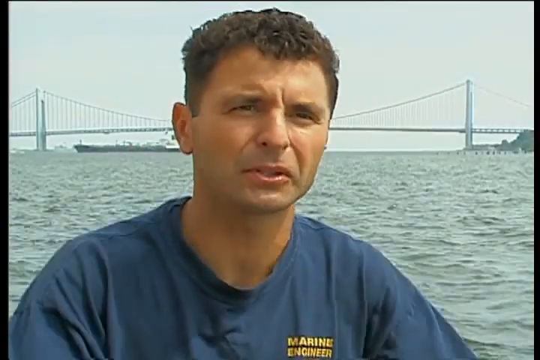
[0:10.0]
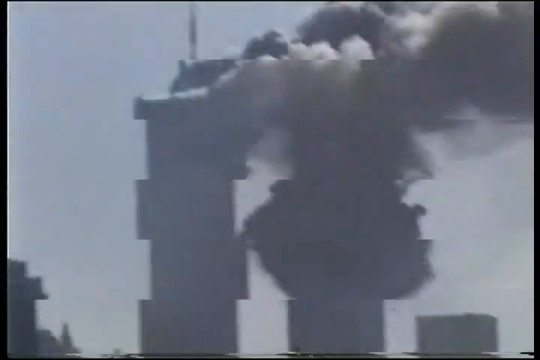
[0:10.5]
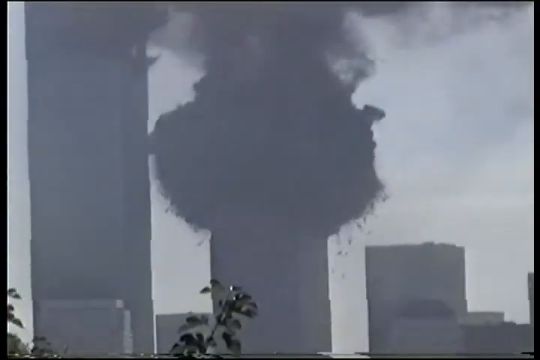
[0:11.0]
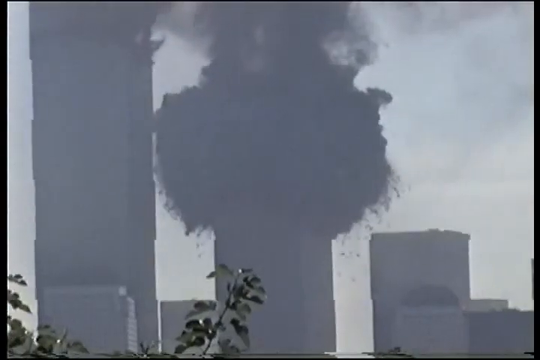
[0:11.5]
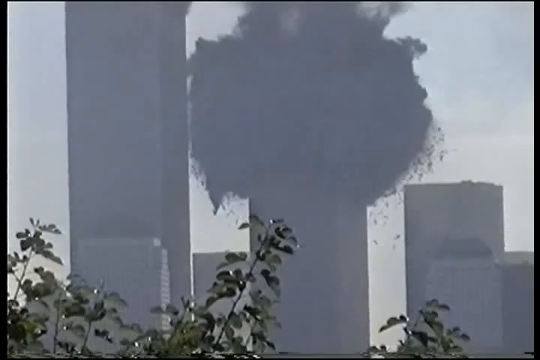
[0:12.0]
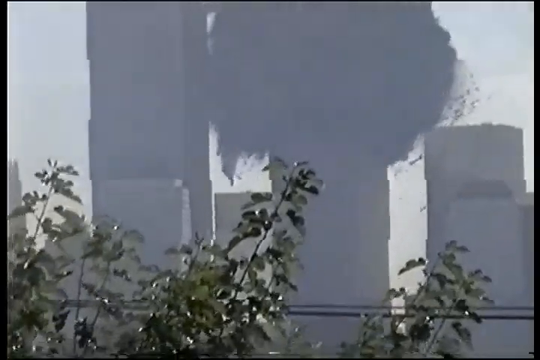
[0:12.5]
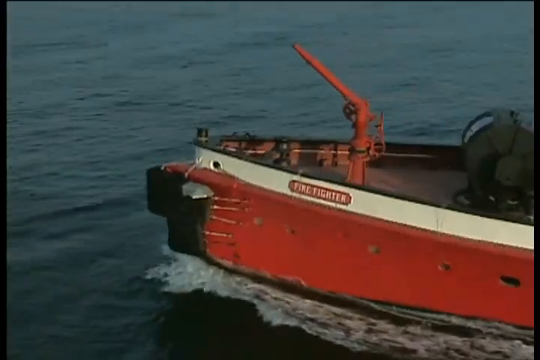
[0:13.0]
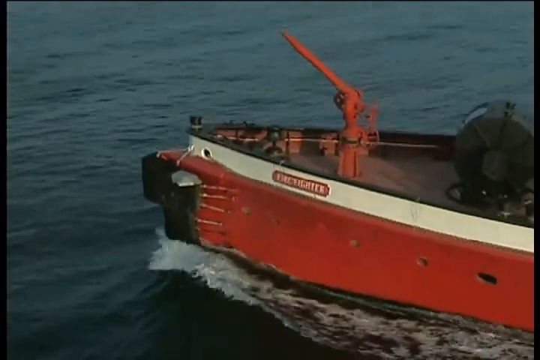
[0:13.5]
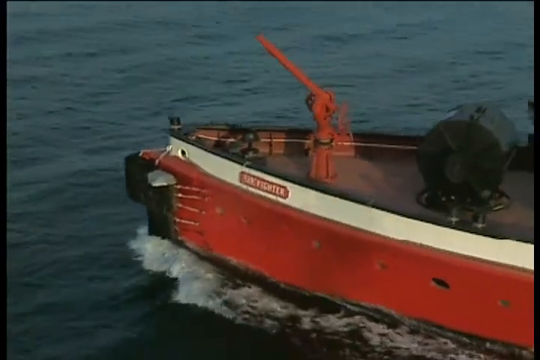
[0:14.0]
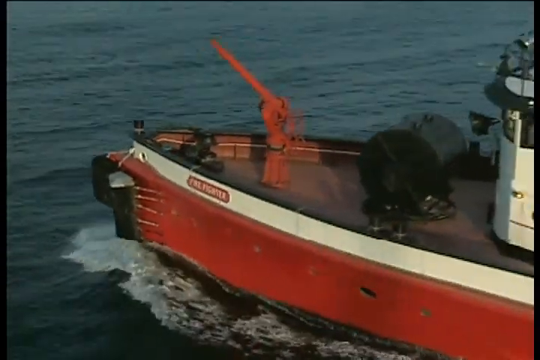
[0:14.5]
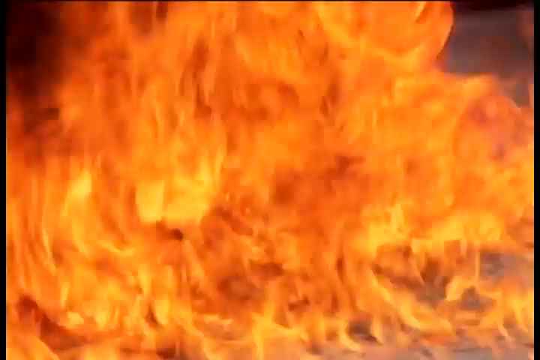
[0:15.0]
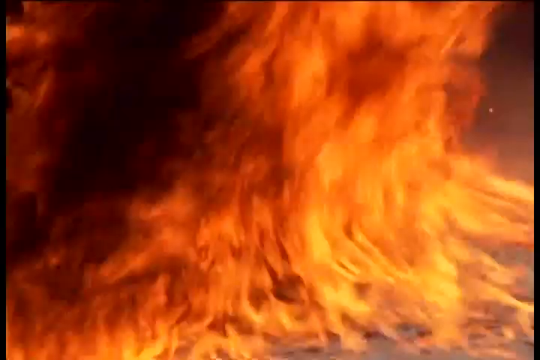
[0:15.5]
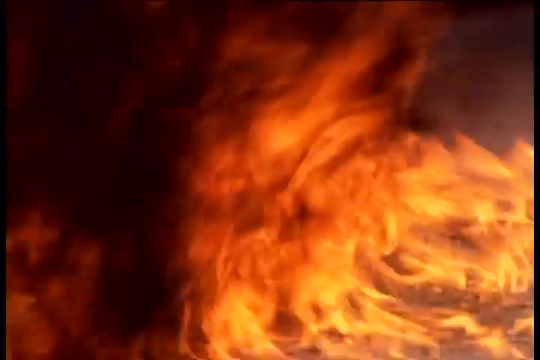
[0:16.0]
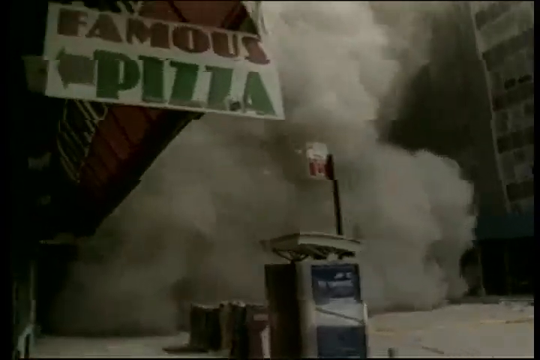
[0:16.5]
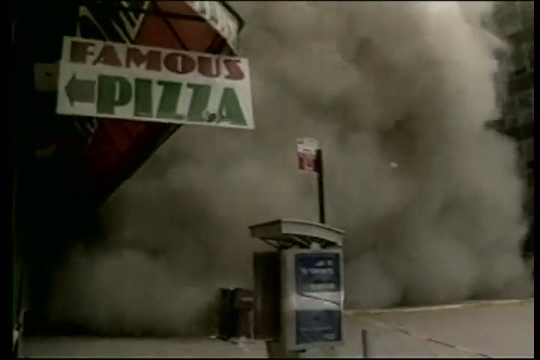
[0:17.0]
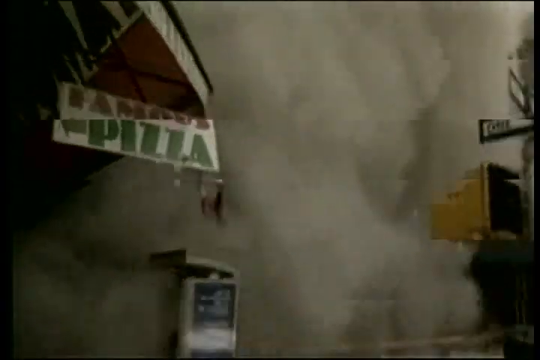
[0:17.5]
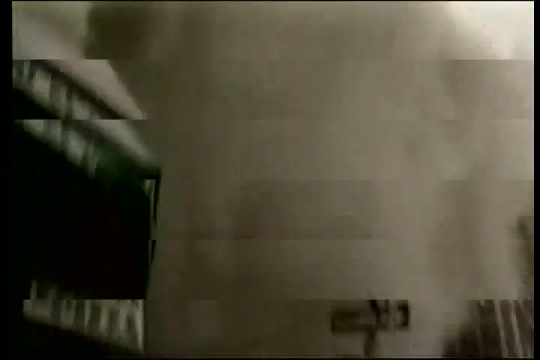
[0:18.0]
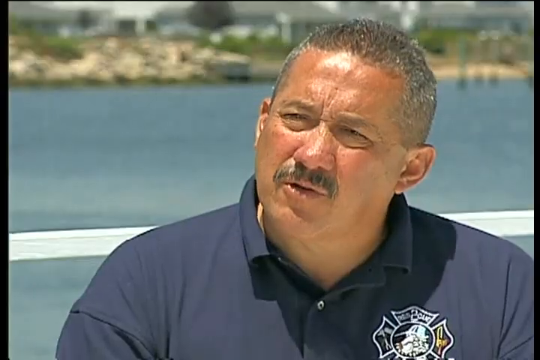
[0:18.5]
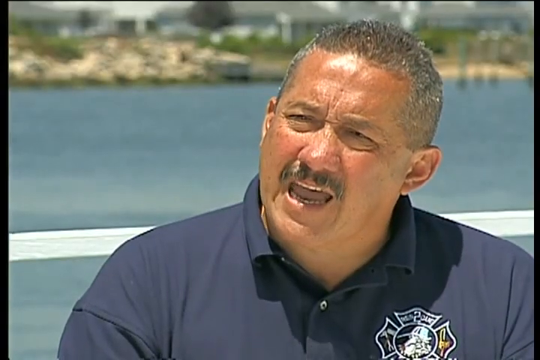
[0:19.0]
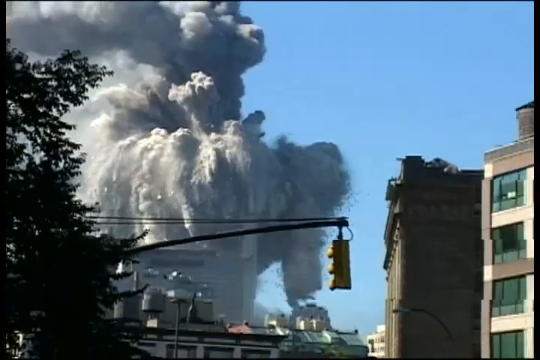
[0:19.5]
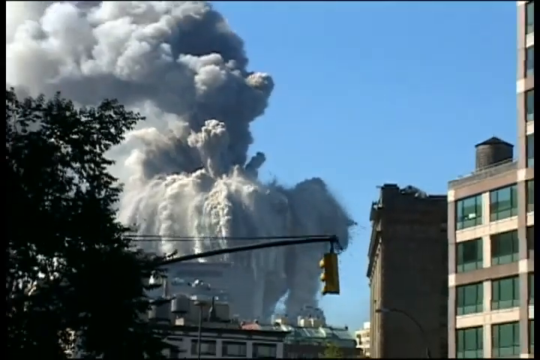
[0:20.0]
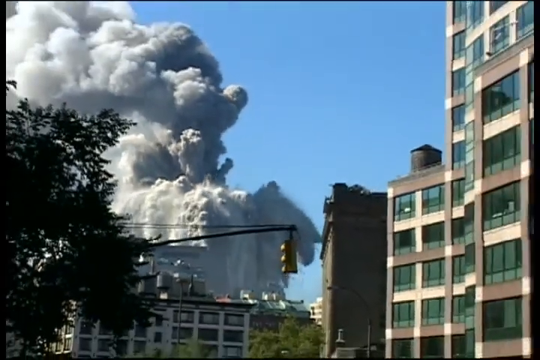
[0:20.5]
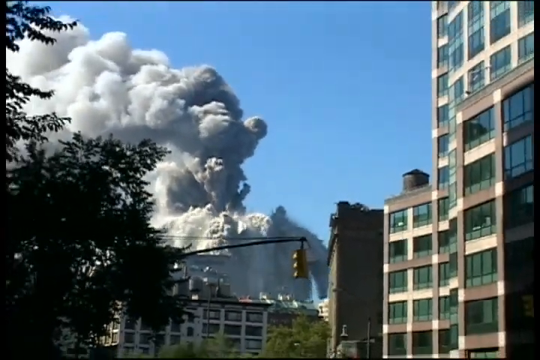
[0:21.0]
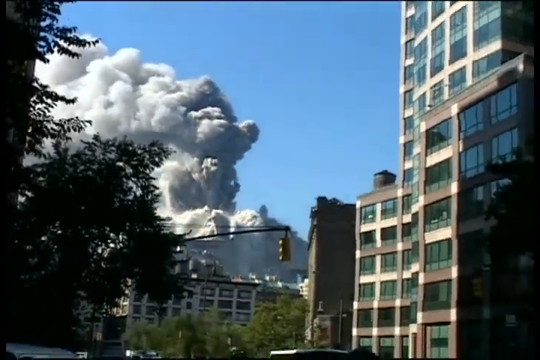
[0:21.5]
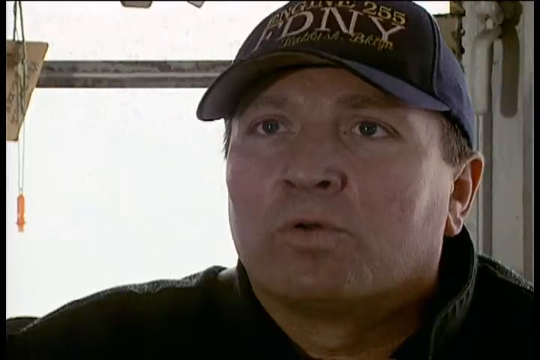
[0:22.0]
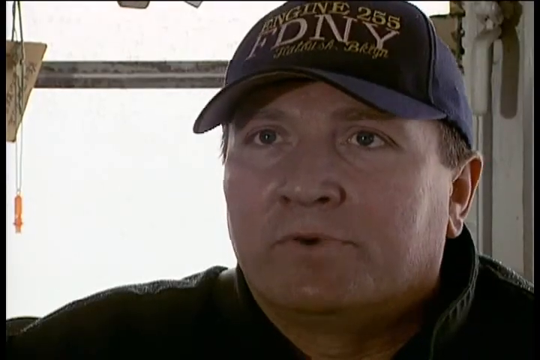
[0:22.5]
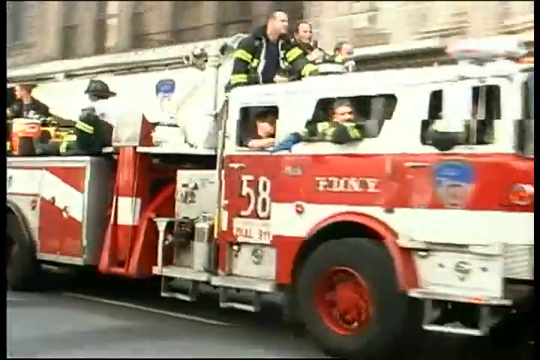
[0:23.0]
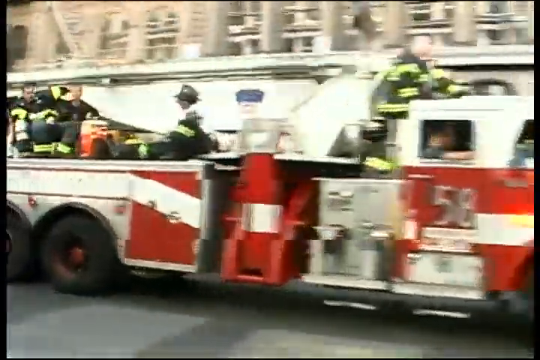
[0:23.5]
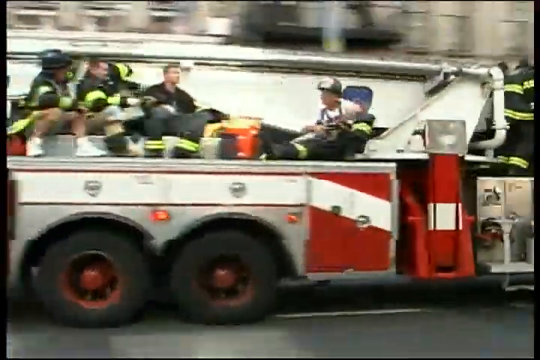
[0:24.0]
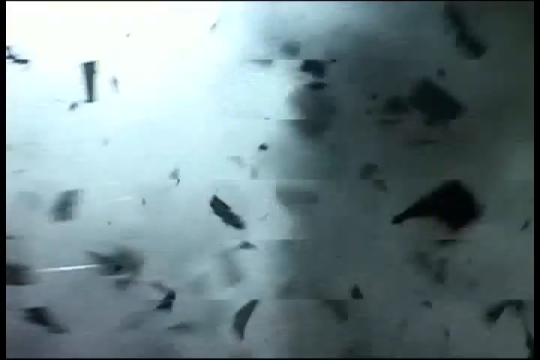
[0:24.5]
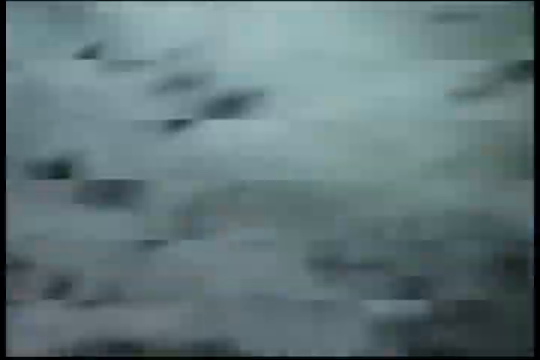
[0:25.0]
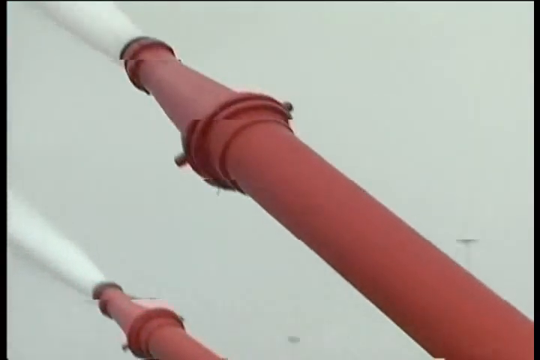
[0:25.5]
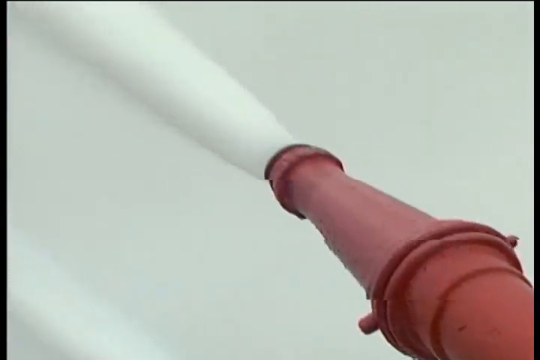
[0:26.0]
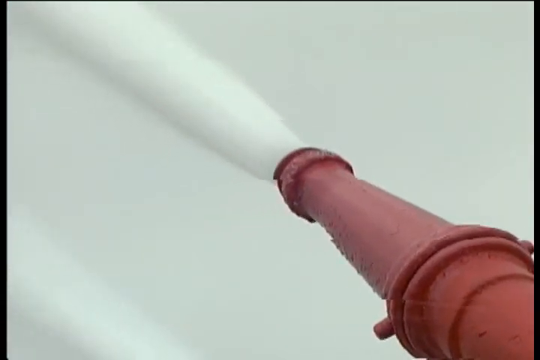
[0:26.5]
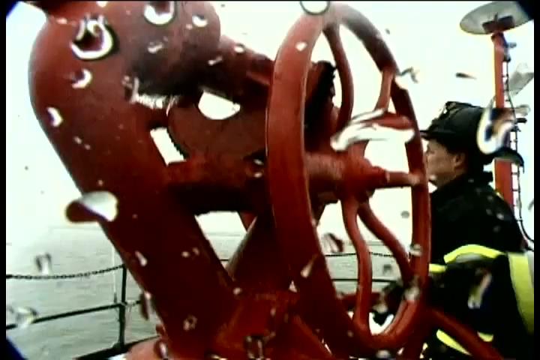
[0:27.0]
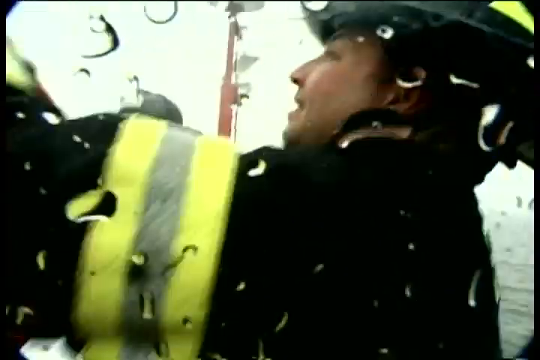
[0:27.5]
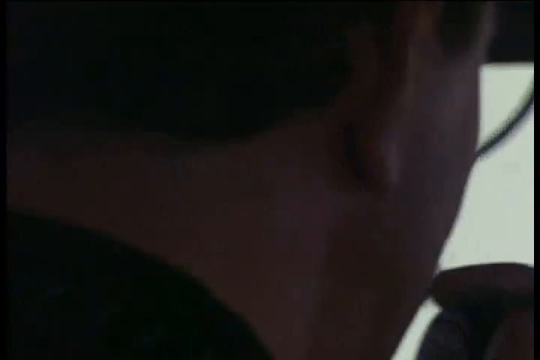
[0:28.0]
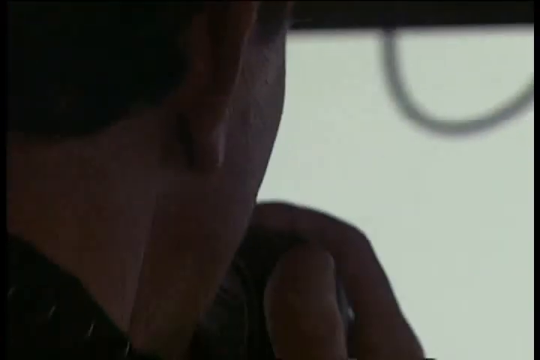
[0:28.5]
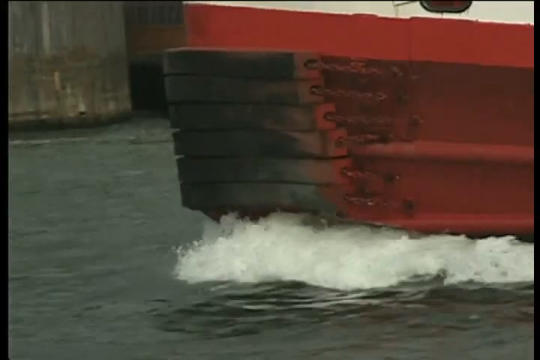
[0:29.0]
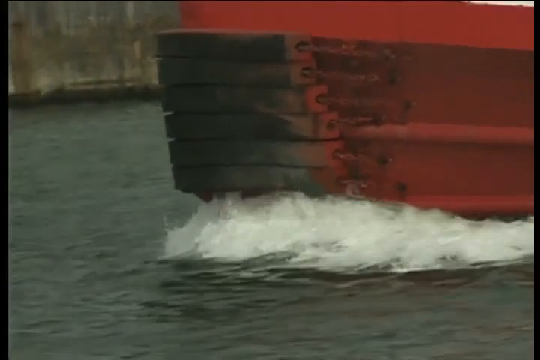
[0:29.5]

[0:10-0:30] A man stands in front of an ocean, with a large suspension bridge behind him and a large boat going under the bridge on the left side of the screen. He wears a blue shirt, has short hair, and is seen from the shoulders up. The view switches to the Twin Towers, with the tower on the right collapsing, then to a boat that appears to have some sort of red water gun on its front; the bottom of the boat is red, outlined in white. A picture of fire follows, then smoke and rubble blowing through a city street, with a pizza place on the left side of the screen whose sign reads "Famous Pizza," with "Famous" in red and "Pizza" in green. A man in a blue shirt talks, and another image shows the tower collapsing. A fire truck moves toward the right side of the screen with many firemen in the back; three face the right side of the screen and two face the left. More rubble appears, then red metal firefighting guns with water shooting out of them, and then more boats.